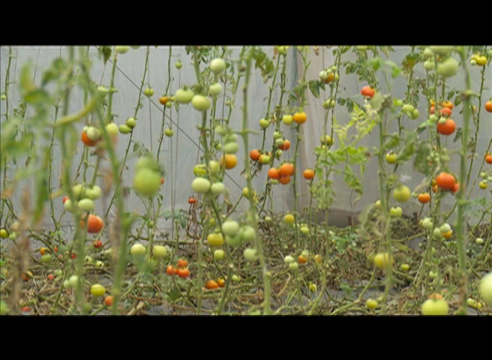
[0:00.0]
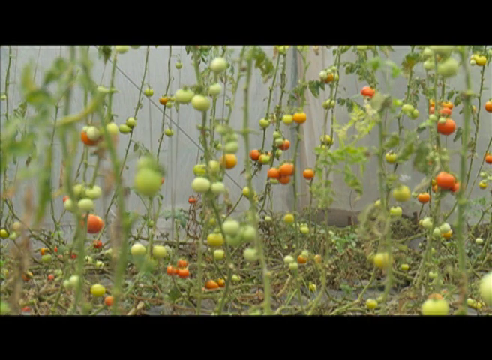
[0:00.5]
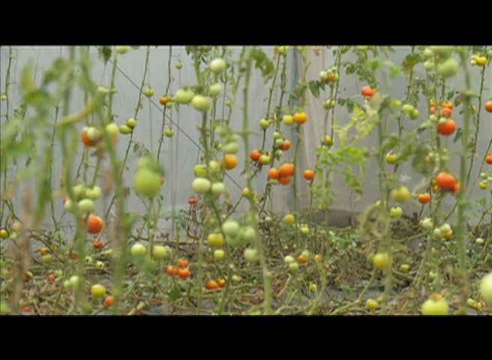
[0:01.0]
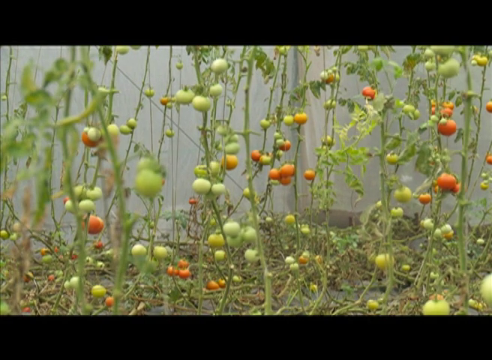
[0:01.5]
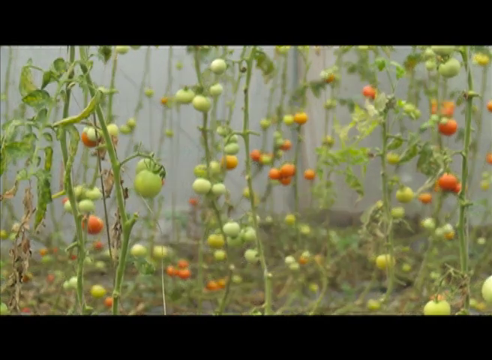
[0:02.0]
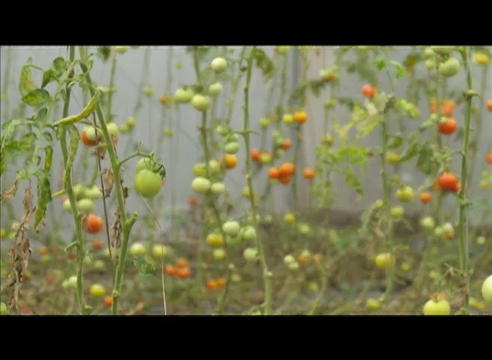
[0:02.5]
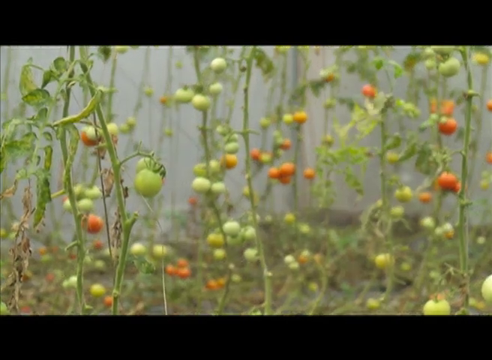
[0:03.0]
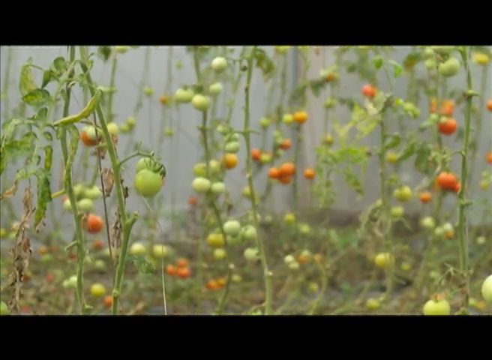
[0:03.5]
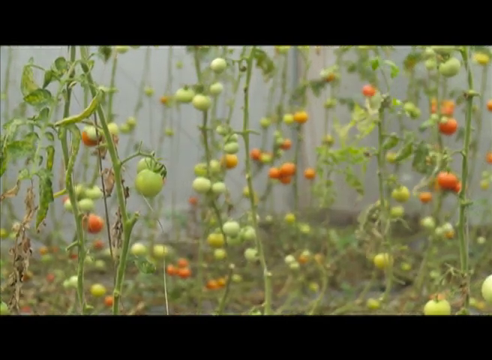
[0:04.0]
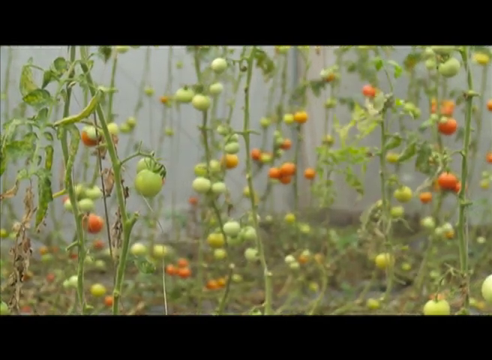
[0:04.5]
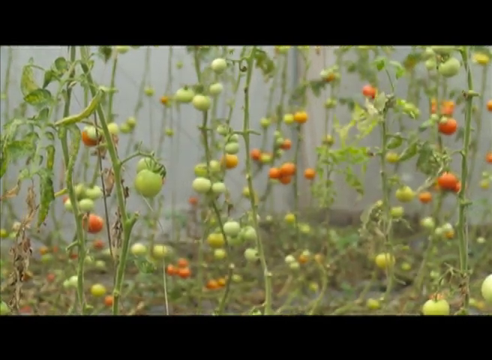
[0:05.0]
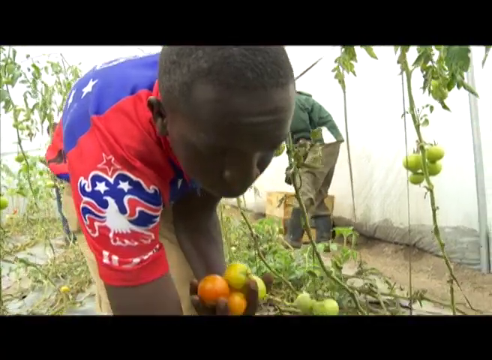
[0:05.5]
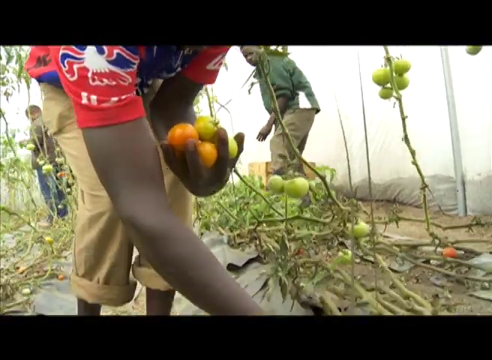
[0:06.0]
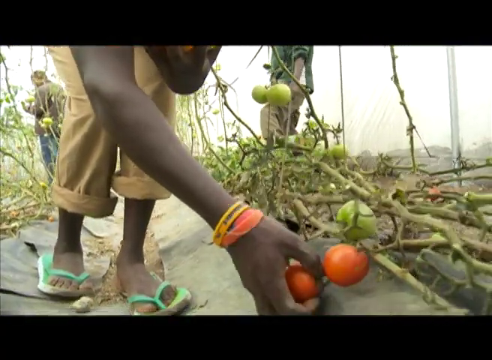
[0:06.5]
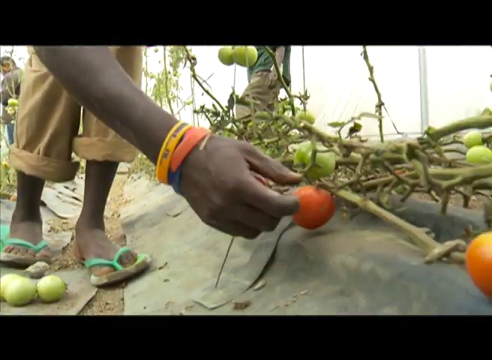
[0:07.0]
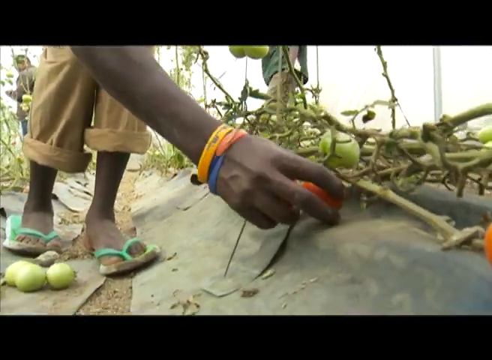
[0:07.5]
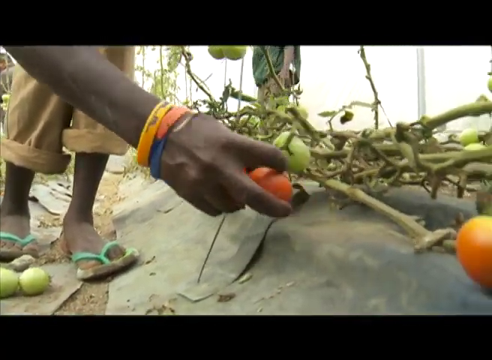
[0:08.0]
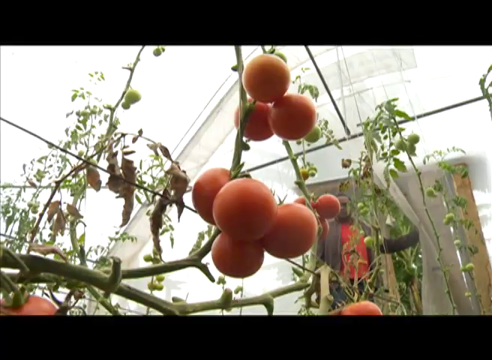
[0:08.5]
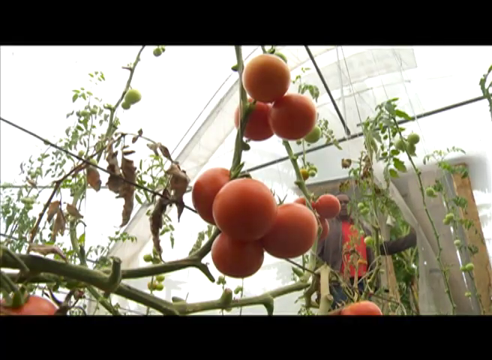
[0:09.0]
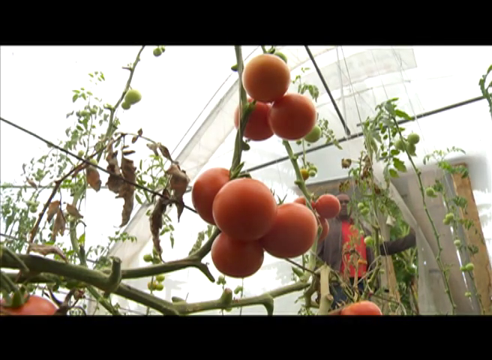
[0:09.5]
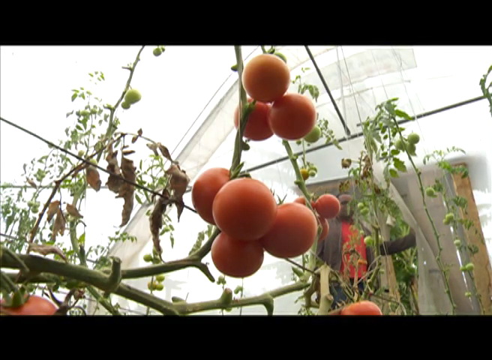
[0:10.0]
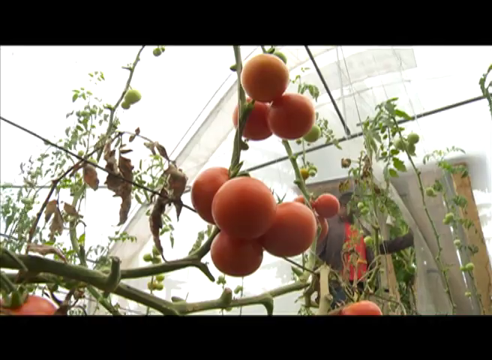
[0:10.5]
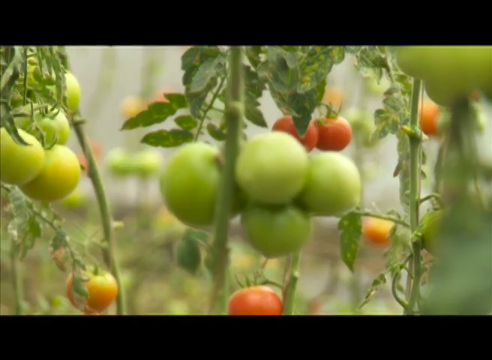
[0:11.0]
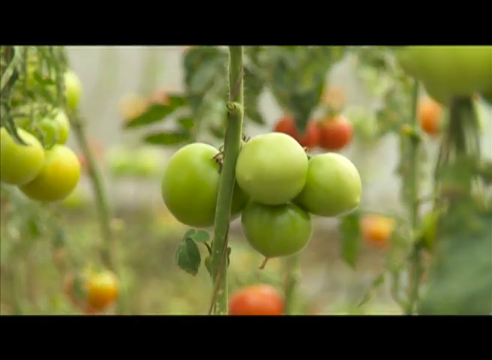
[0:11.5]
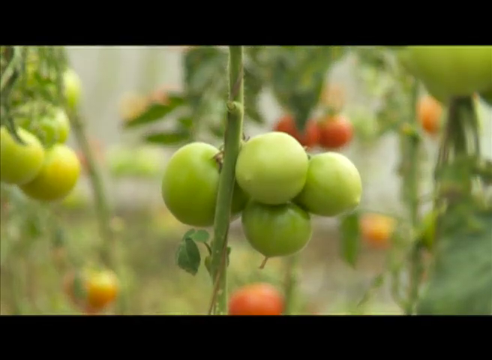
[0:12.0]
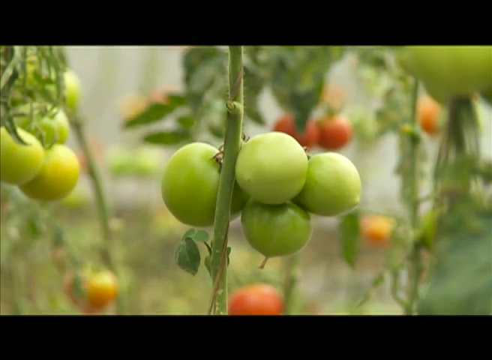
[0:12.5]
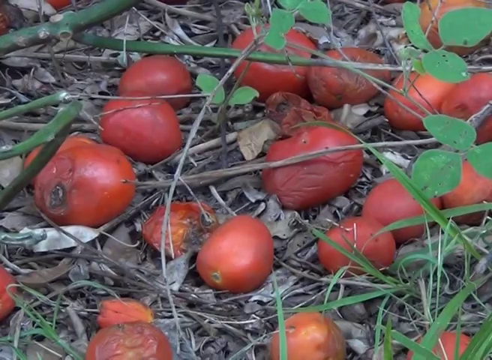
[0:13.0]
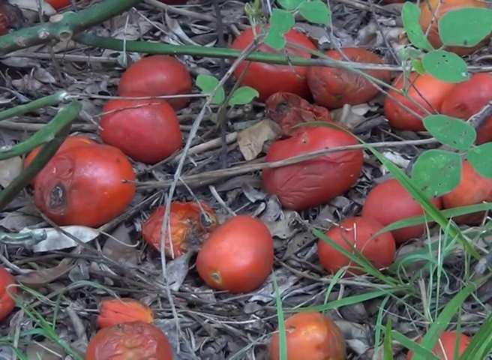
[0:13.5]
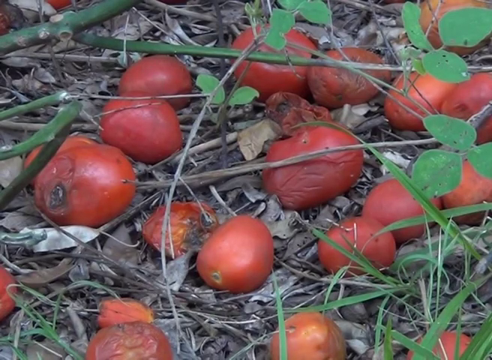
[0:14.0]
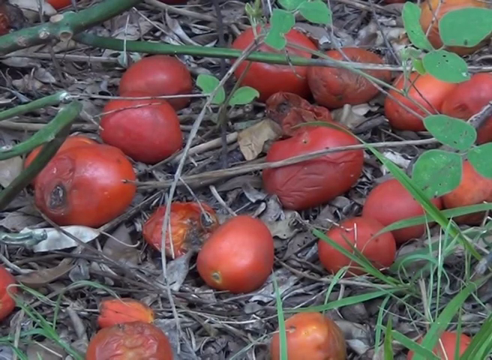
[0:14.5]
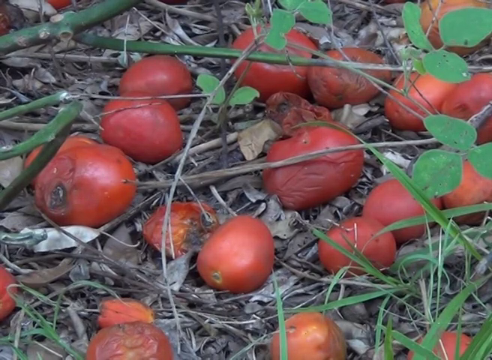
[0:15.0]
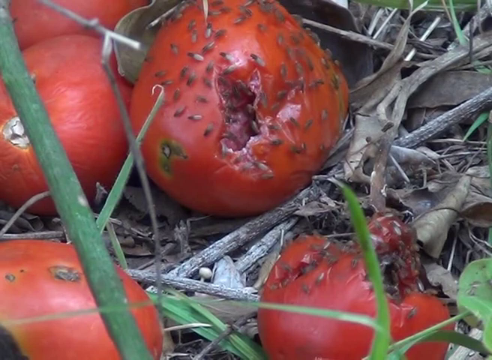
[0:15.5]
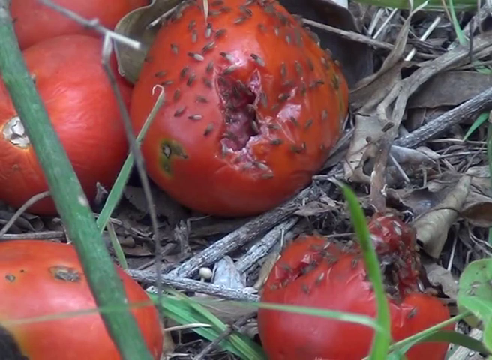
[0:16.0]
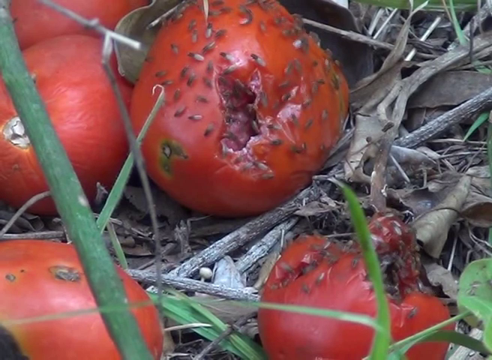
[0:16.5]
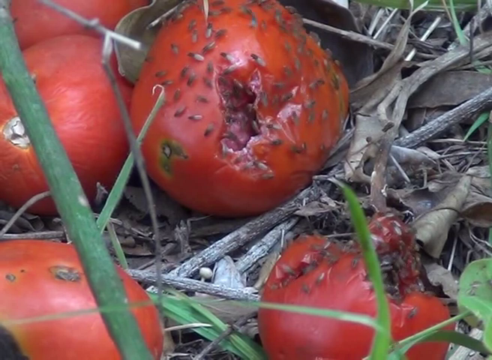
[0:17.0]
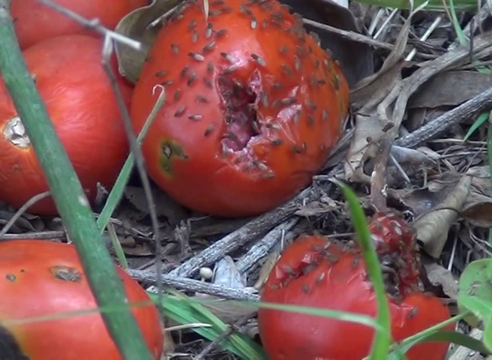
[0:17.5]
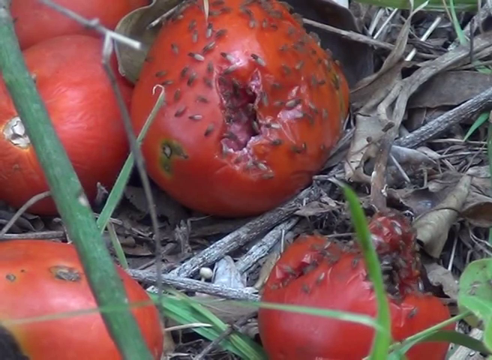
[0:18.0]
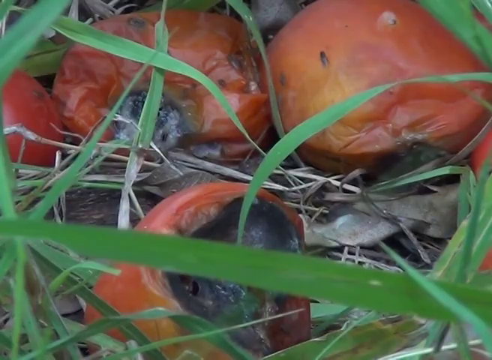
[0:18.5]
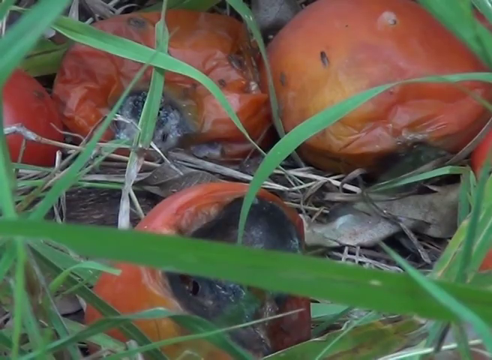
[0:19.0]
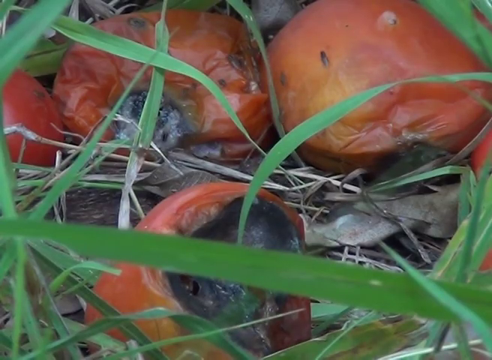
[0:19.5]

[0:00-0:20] A garden holds a large number of plants that seem to have green and red tomatoes on them, and the vines move in the wind from left to right. The video cuts to a man holding a bunch of tomatoes in his left hand while bent over, picking more tomatoes from a vine. Next comes another vine with clusters of red tomatoes, followed by a shot of a cluster of green tomatoes on a vine. Some tomatoes on the floor look like they are rotting. A close-up of one of these tomatoes shows many fruit flies on it, and another rotting tomato appears. After a cut, more rotting tomatoes are visible, with a few fruit flies walking around on them and blades of green grass in the foreground.